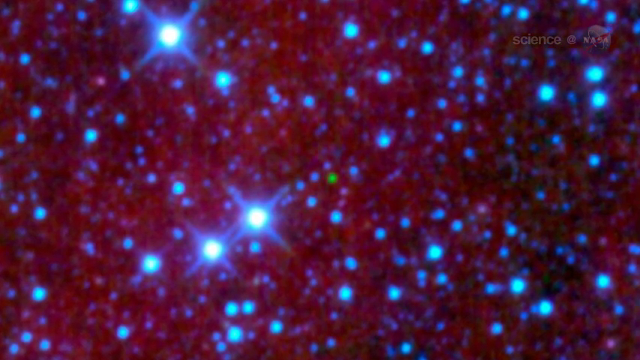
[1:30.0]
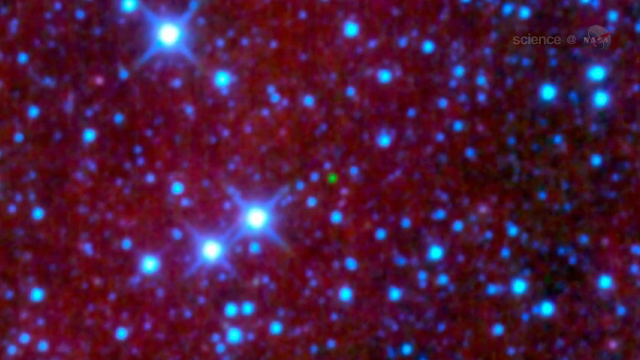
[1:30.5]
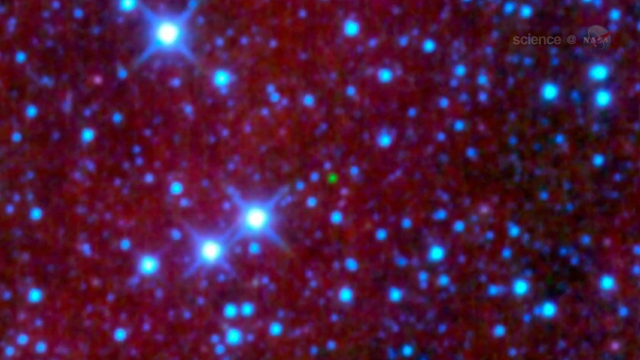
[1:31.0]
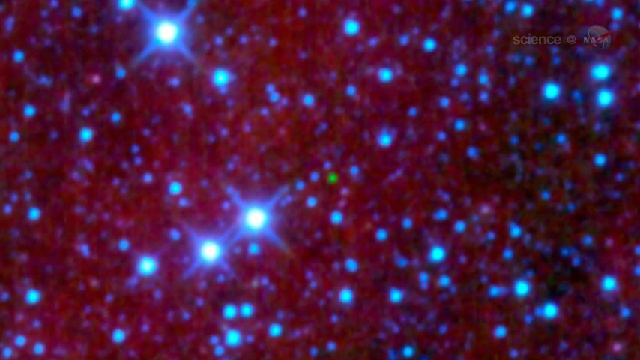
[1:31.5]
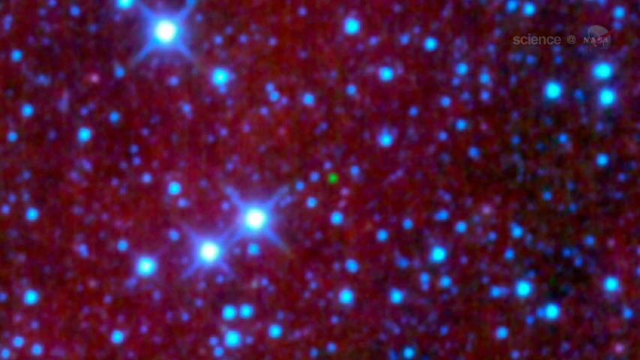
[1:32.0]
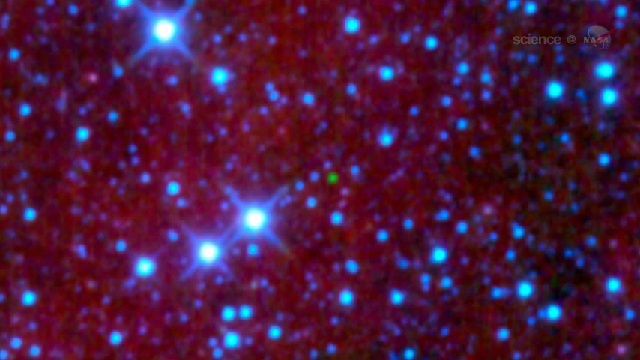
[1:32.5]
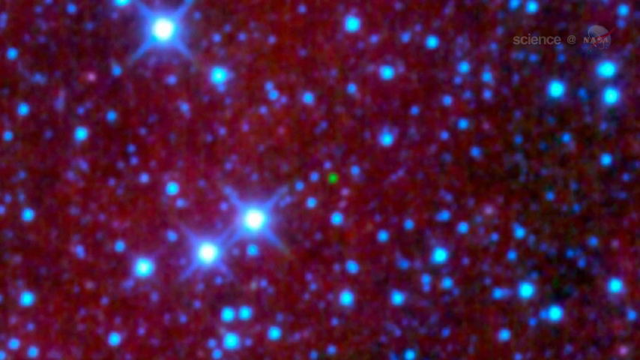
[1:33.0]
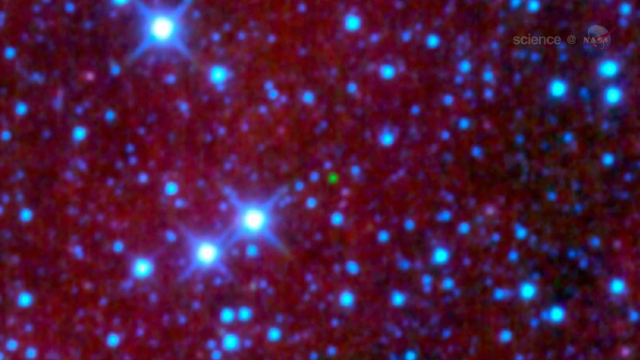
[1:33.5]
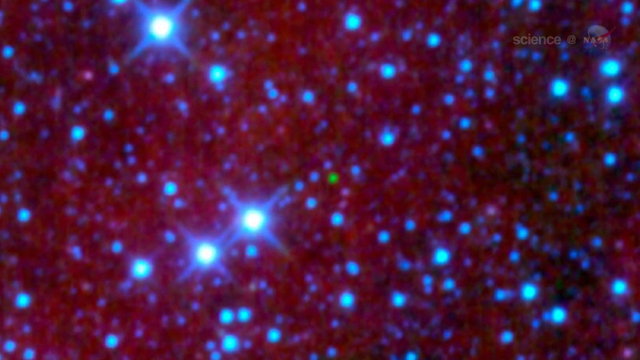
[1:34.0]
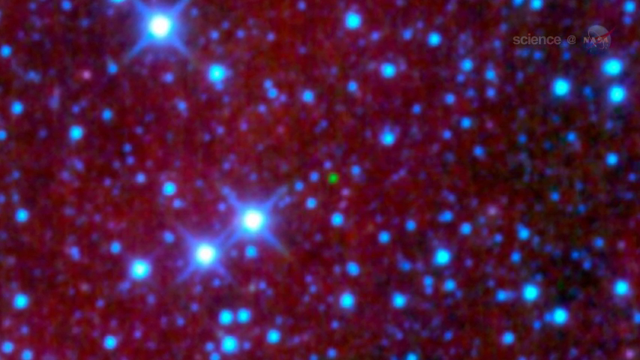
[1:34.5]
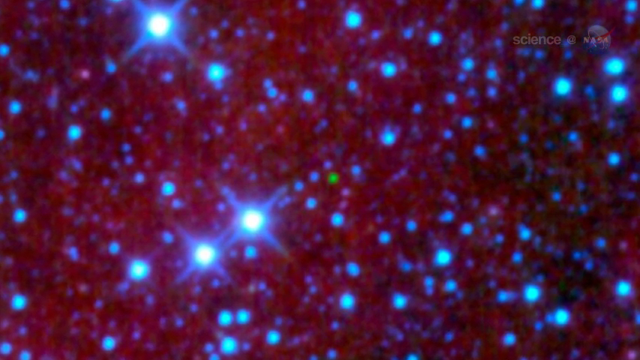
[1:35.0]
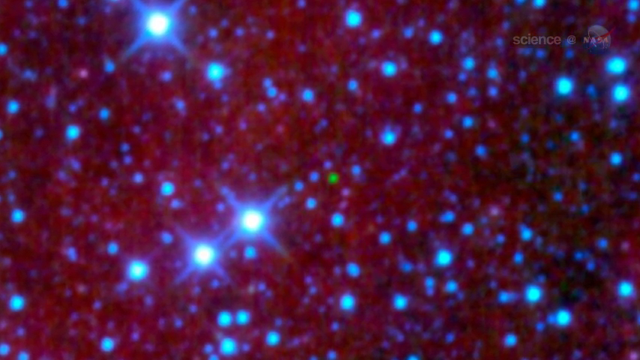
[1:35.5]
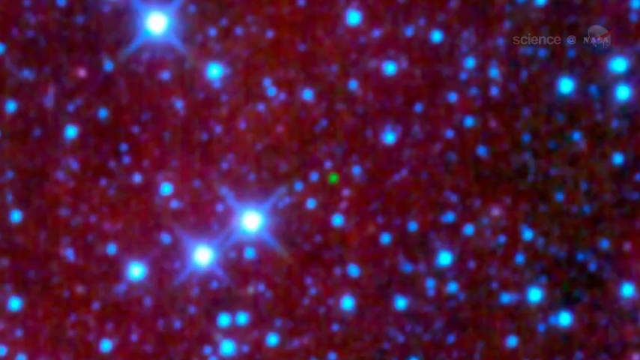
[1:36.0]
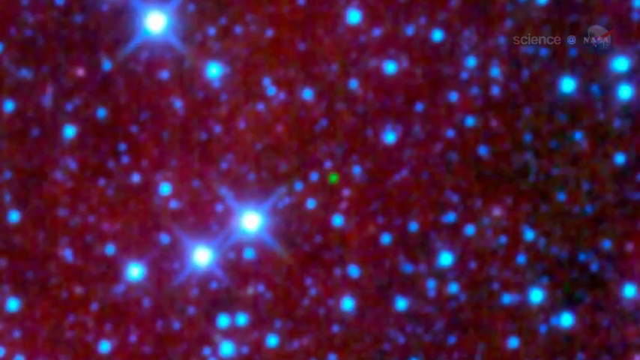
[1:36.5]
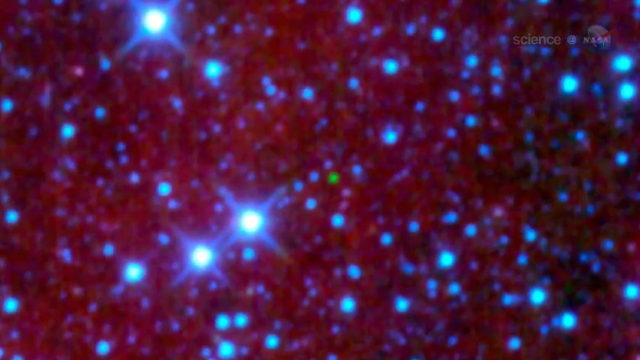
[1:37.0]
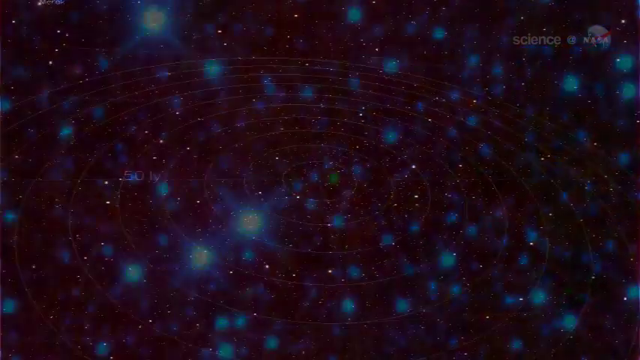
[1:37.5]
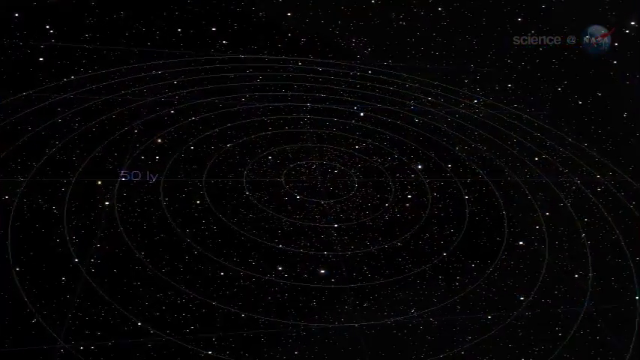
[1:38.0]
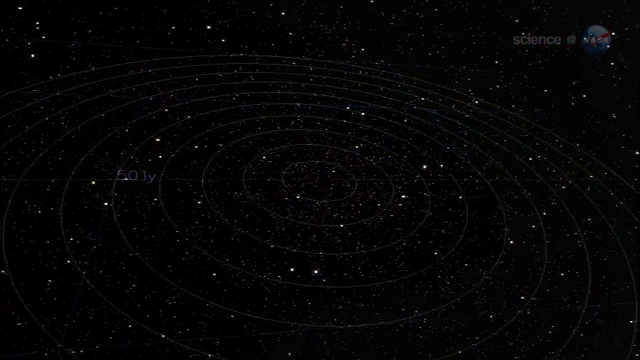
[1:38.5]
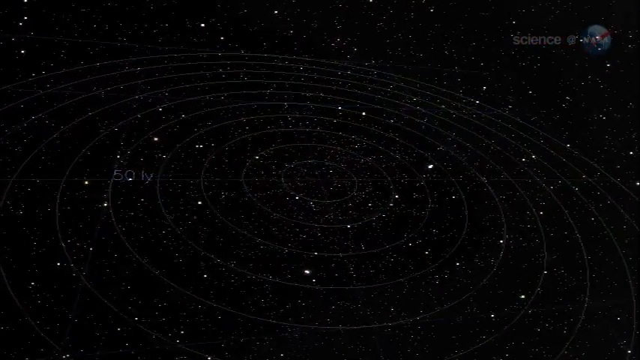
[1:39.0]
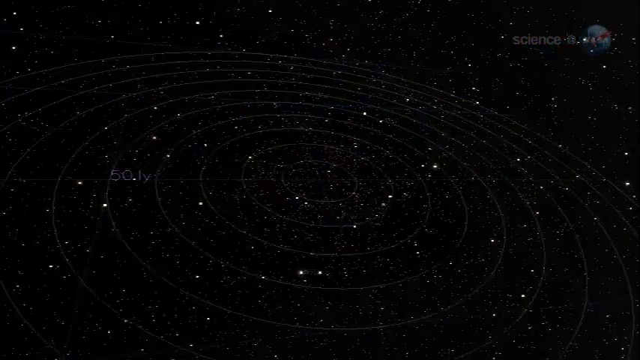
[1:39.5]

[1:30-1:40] Blue stars appear on top of a red background as the camera zooms in on the shot slowly and steadily. It then cuts to what looks like a background of spinning stars, with circles appearing one by one, each encapsulating the other to create a massive web of circles, smaller circles inside bigger ones, all rotating with stars among them, showing many different stars in the galaxy.